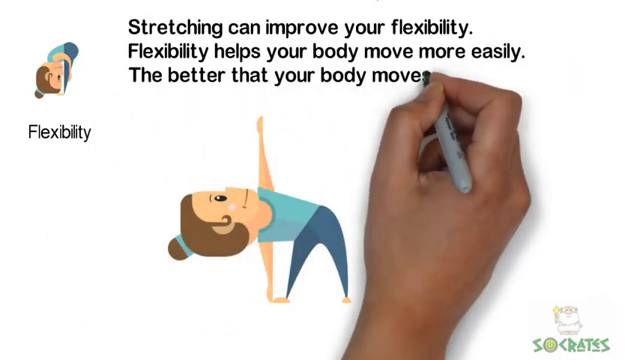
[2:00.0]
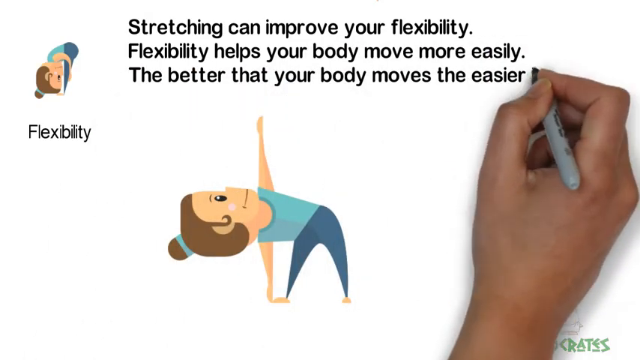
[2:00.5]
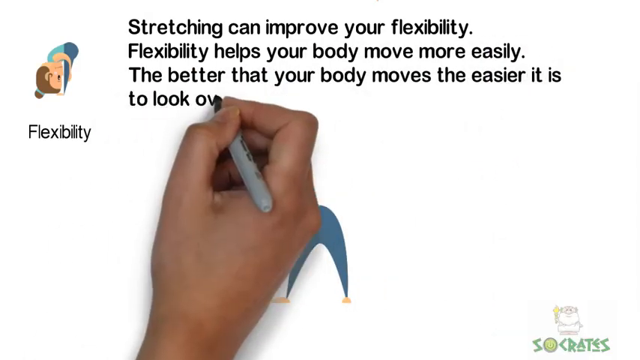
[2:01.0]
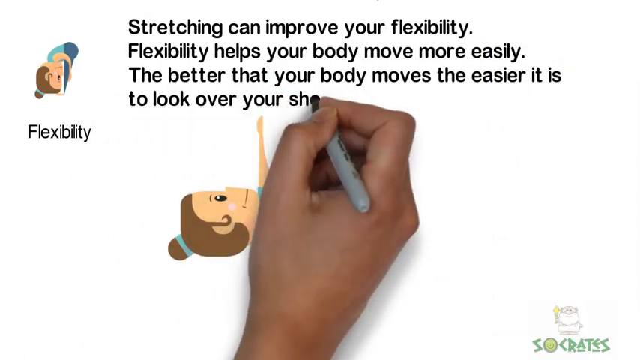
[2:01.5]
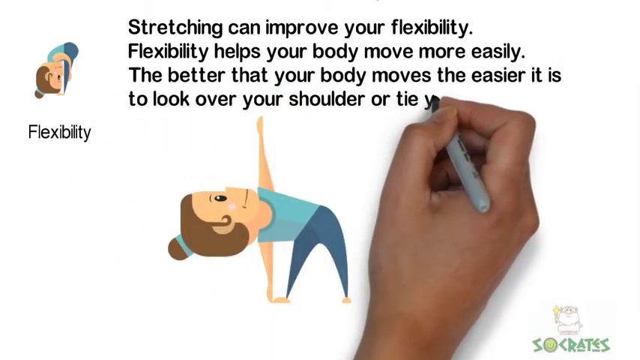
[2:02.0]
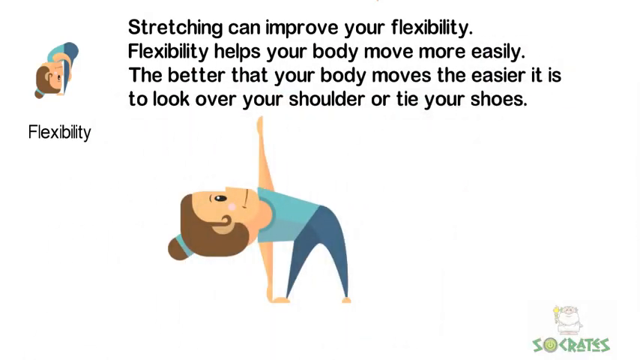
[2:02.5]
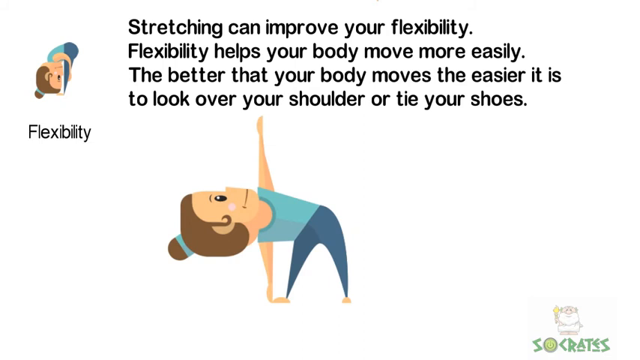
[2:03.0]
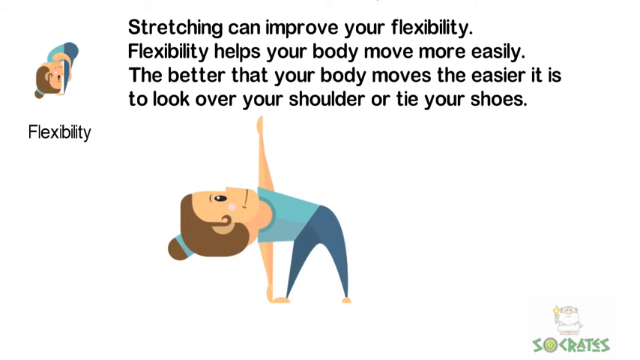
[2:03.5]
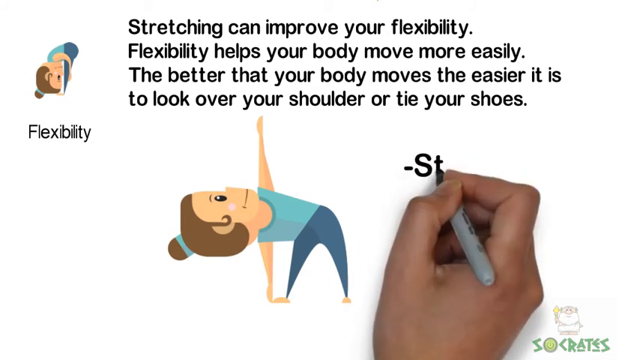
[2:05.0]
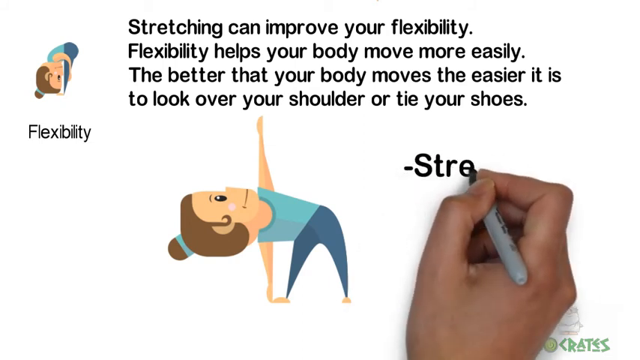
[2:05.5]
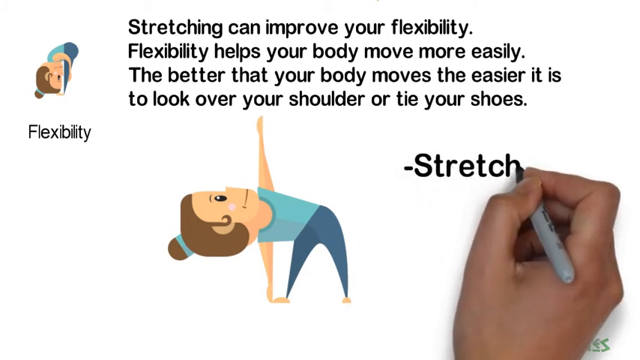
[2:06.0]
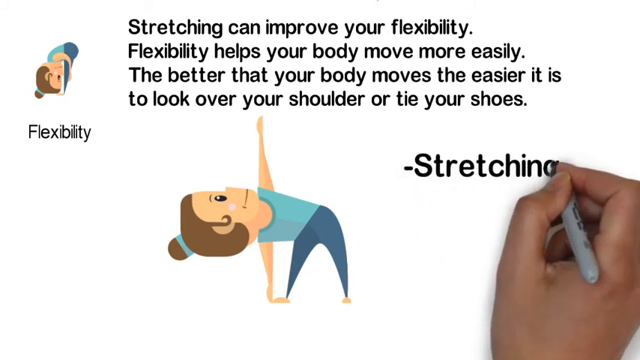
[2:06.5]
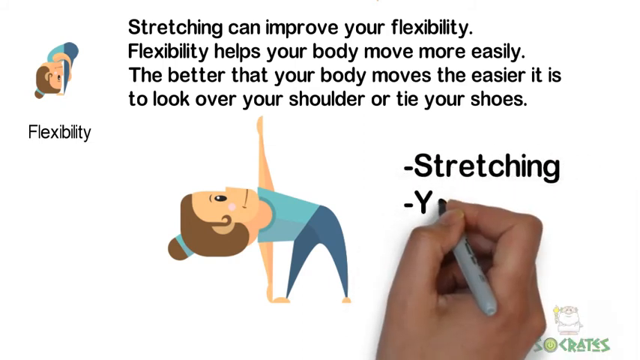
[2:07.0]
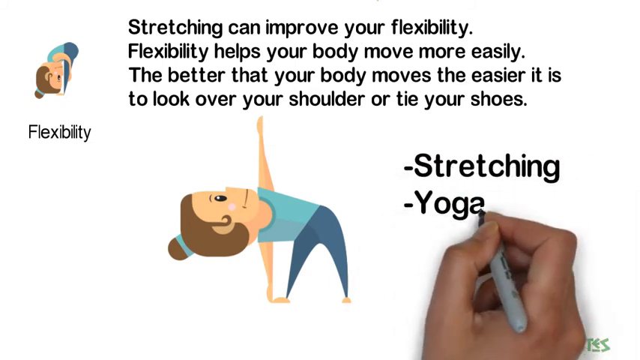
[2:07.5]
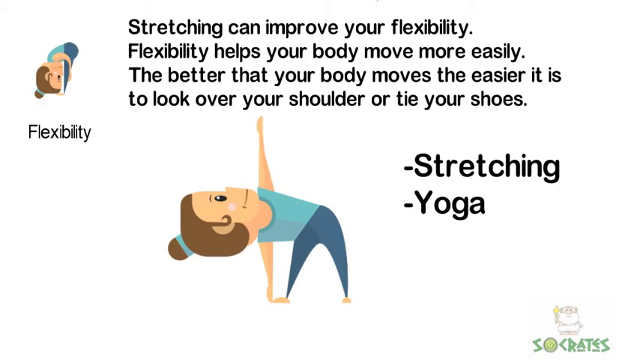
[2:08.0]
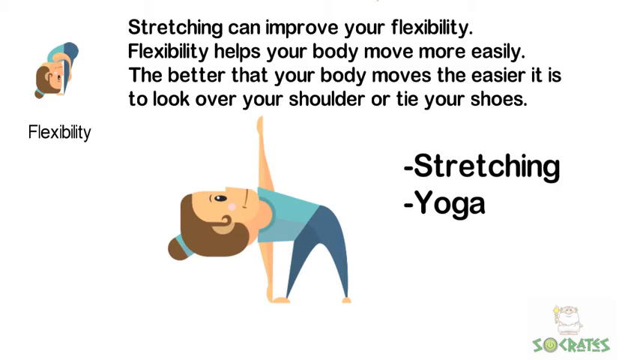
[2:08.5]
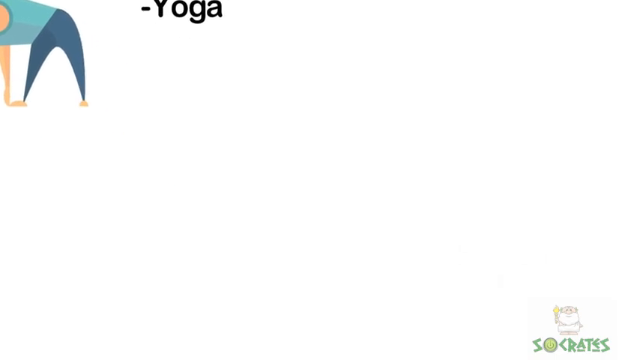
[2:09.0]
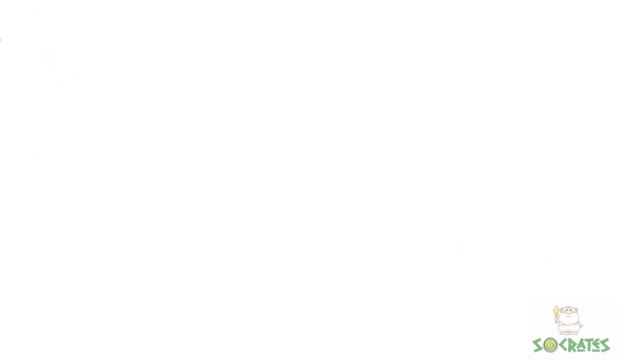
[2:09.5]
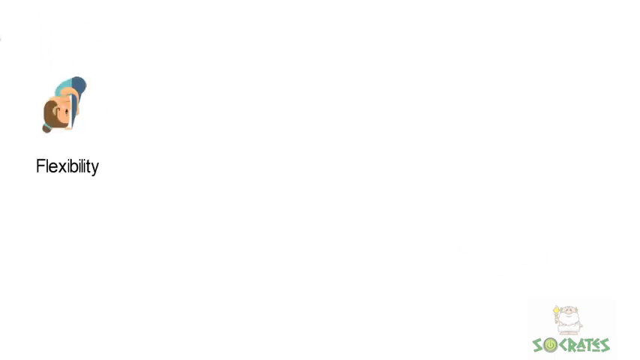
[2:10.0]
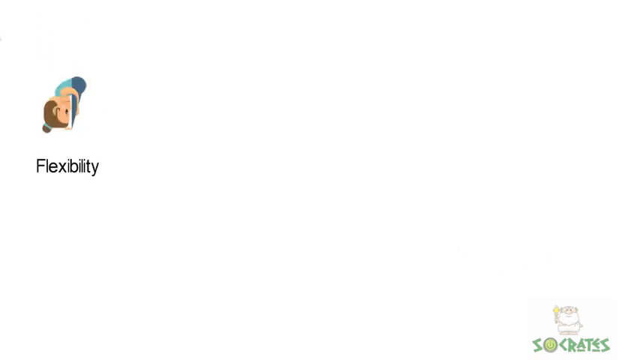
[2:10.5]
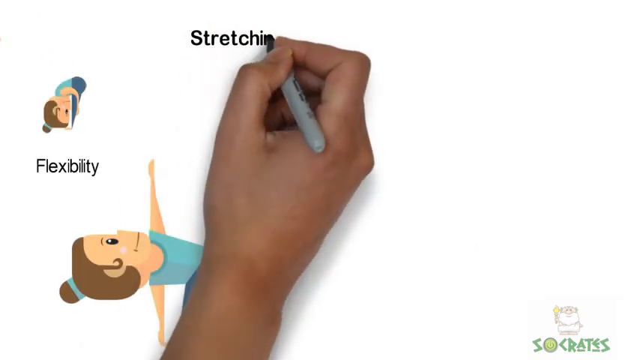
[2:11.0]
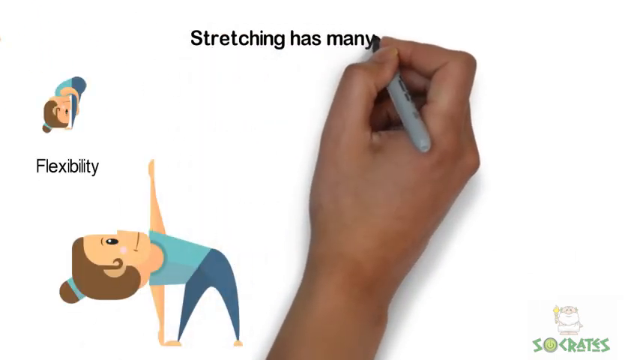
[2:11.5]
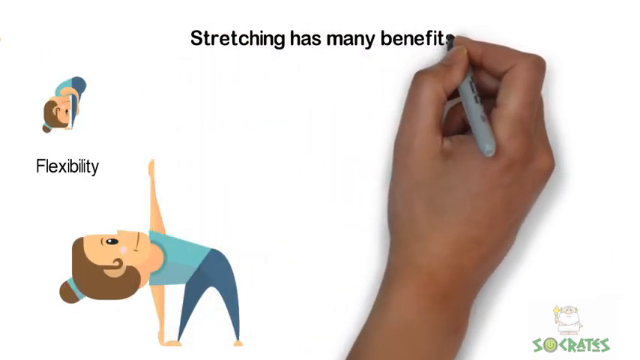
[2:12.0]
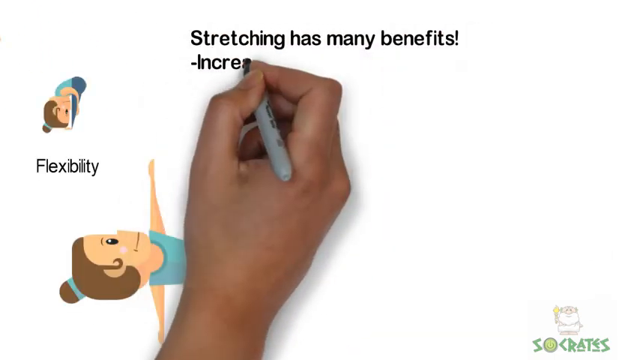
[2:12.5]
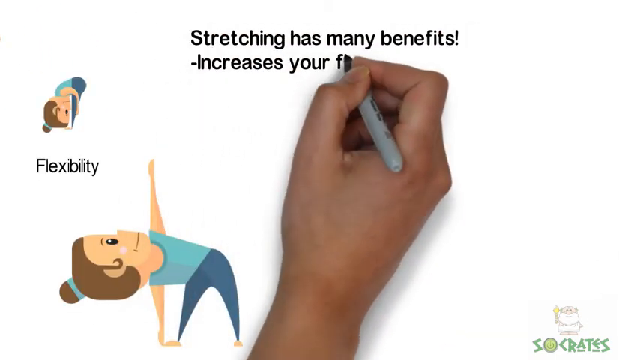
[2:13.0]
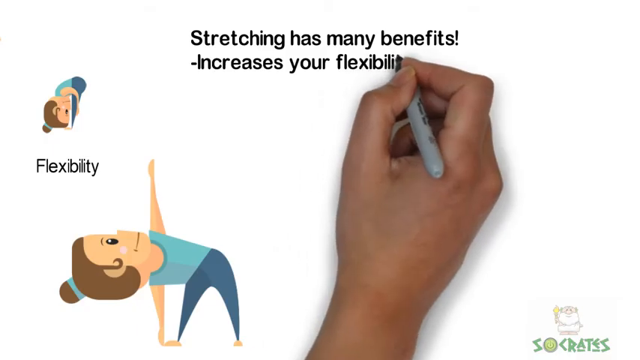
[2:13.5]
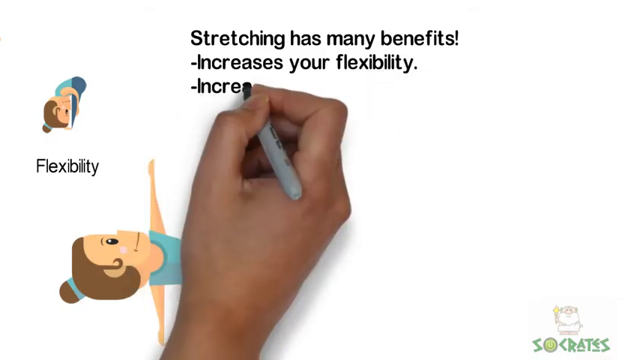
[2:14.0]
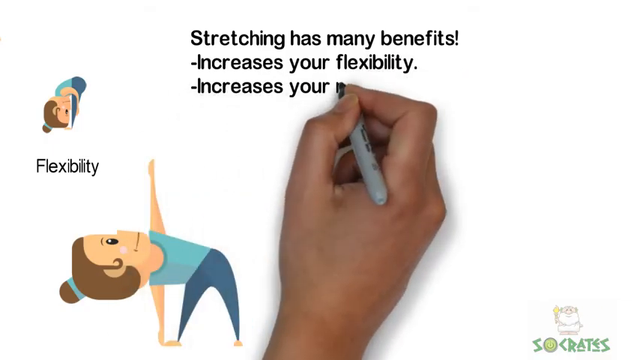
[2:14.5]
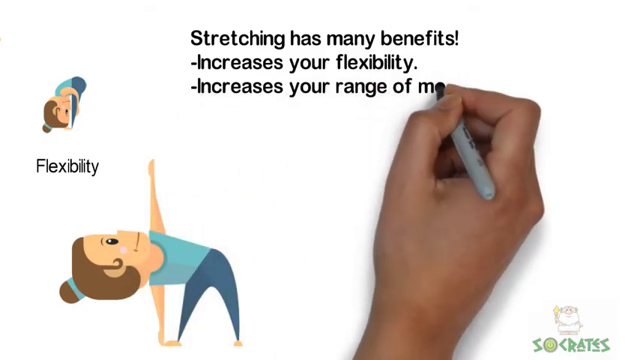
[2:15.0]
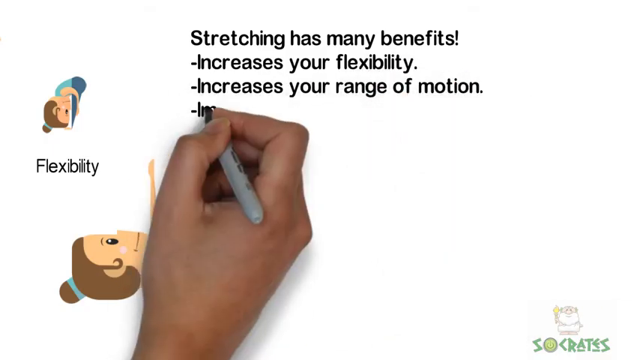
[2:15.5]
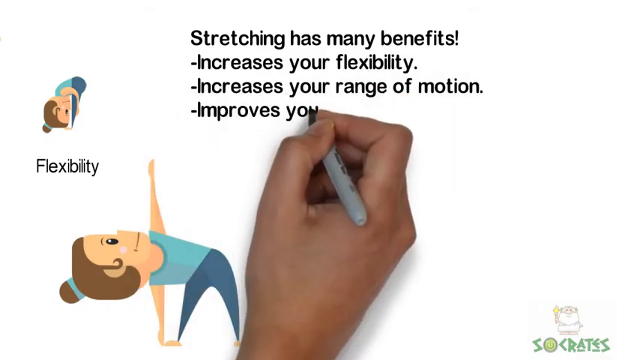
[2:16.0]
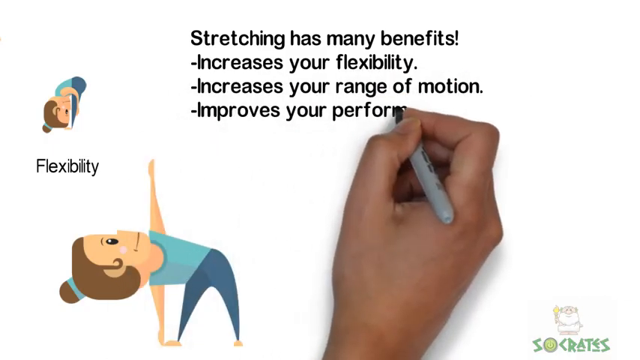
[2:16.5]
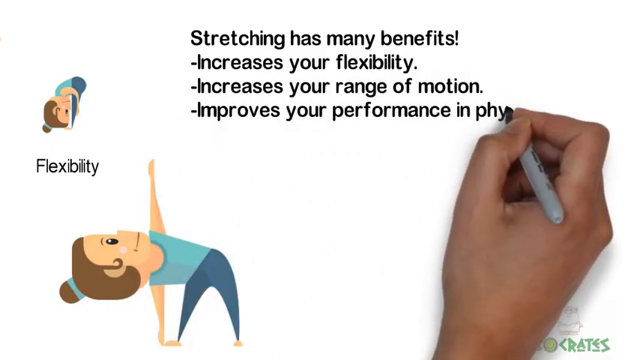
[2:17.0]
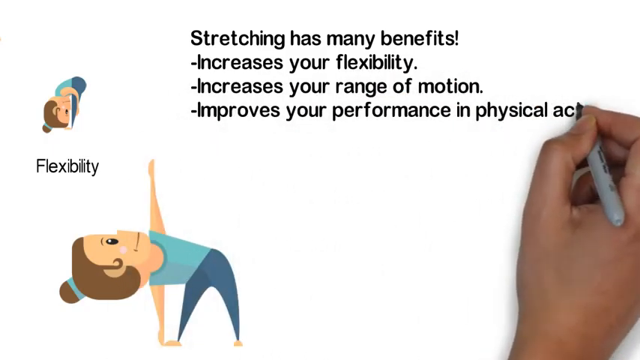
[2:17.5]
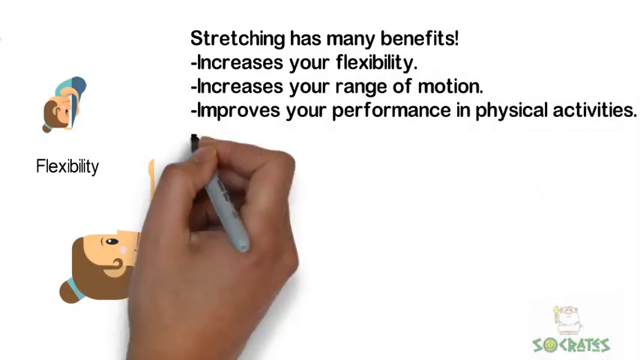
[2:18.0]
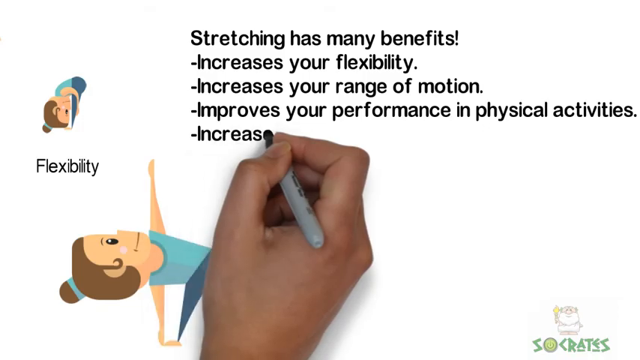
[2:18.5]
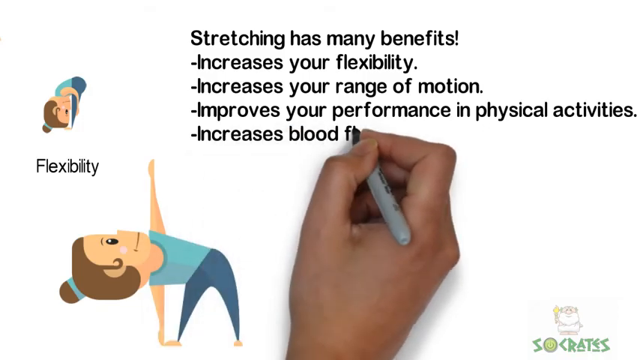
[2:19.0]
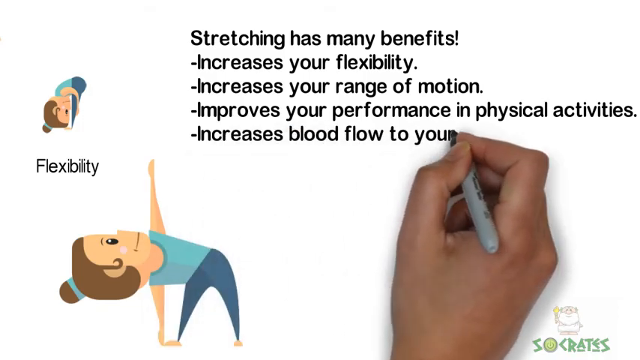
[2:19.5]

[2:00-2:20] A person's hand holds a gray marker with a black tip over the white screen and writes on it. At the top the text reads: "Stretching can improve your flexibility. Flexibility helps your body move more easily. The better that your body moves, the easier it is to look over your shoulder or tie your shoes." The hand comes back and writes the word "stretching," then "yoga." Everything disappears, and the hand writes: "Stretching has many benefits. Increases your flexibility. Increases your range of motion. Improves your performance in physical activities. Increases blood flow to your muscles." Underneath is a cartoon woman in green stretch pants and a turquoise tank top, with brown hair up in a ponytail. Her feet are planted on the ground, but she leans to her right, with her right arm underneath her right foot and her other arm stretching upward. The word "flexibility" is beneath her.